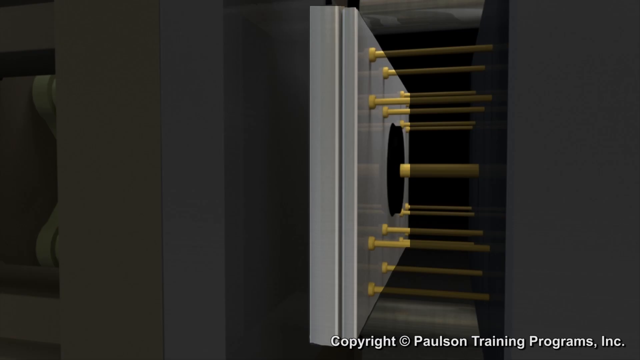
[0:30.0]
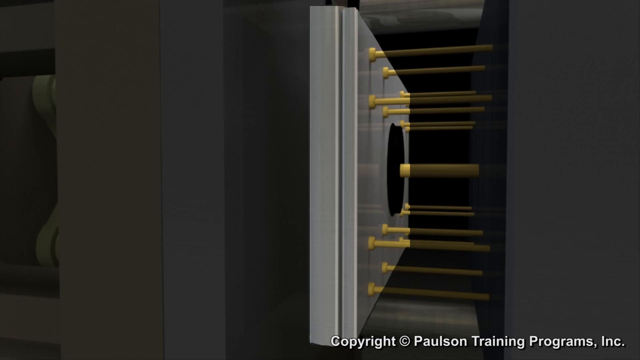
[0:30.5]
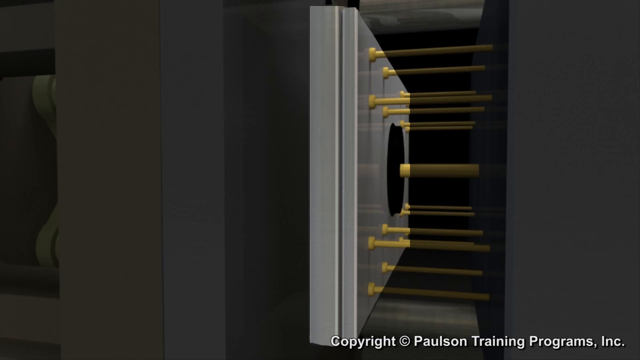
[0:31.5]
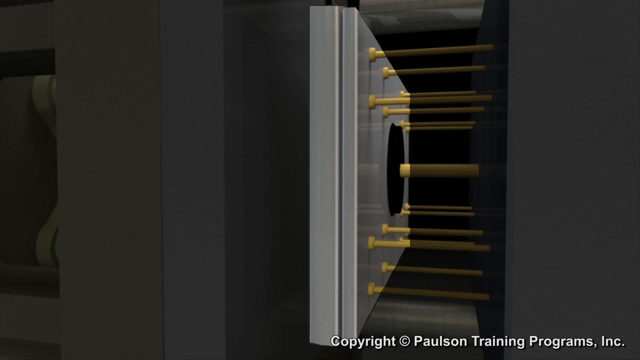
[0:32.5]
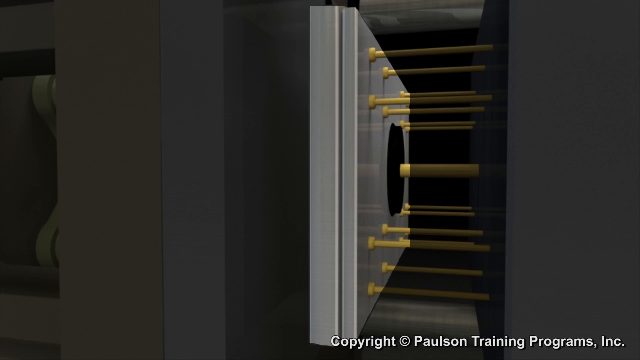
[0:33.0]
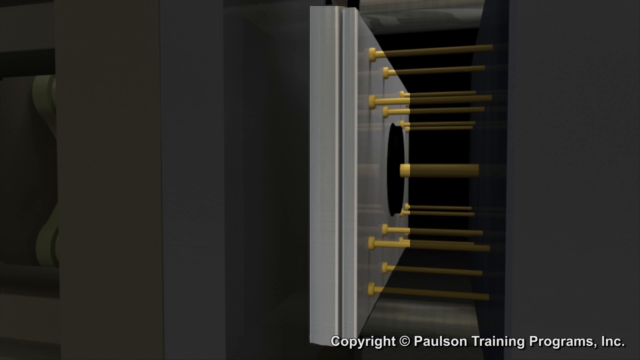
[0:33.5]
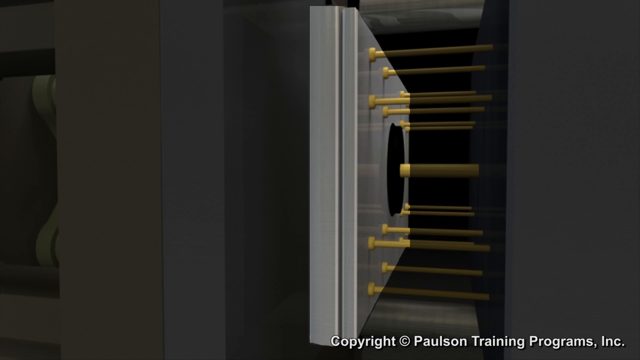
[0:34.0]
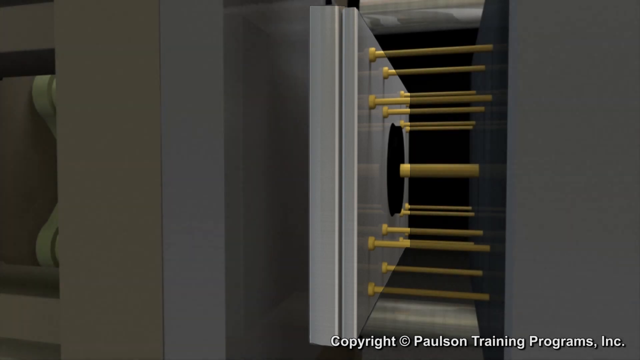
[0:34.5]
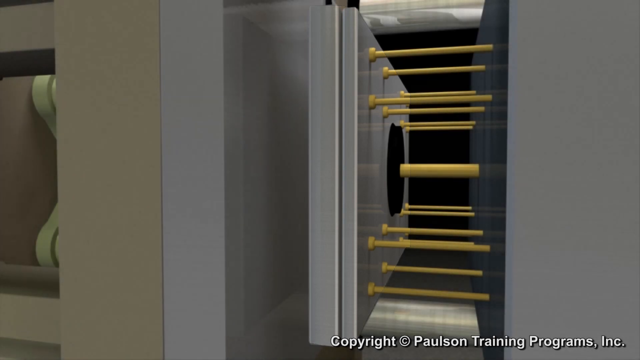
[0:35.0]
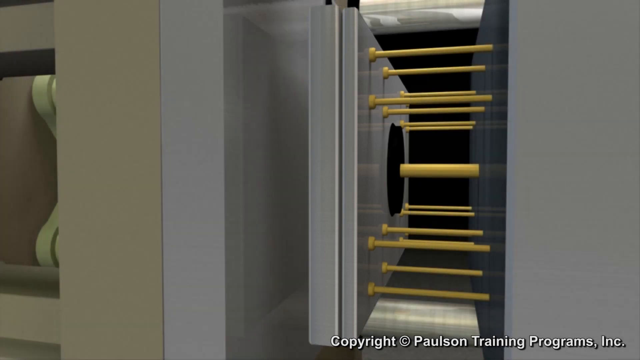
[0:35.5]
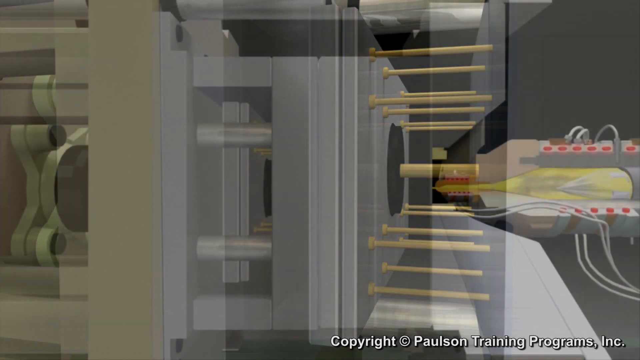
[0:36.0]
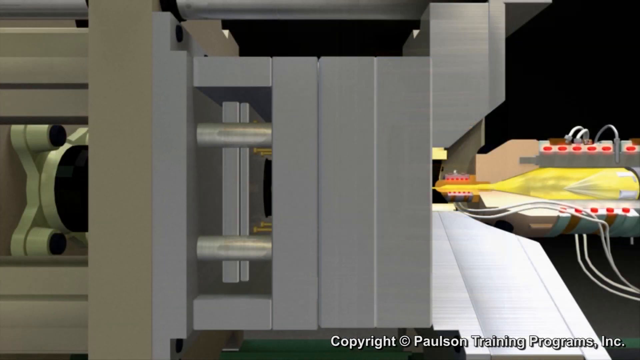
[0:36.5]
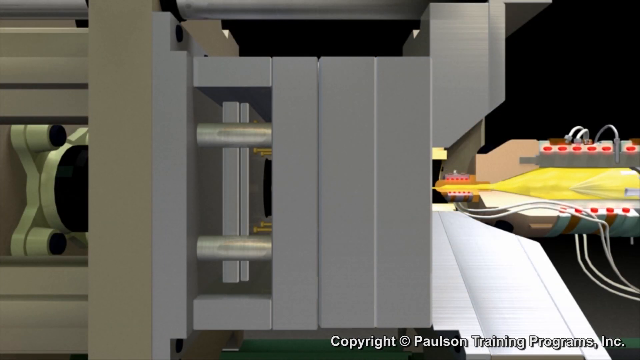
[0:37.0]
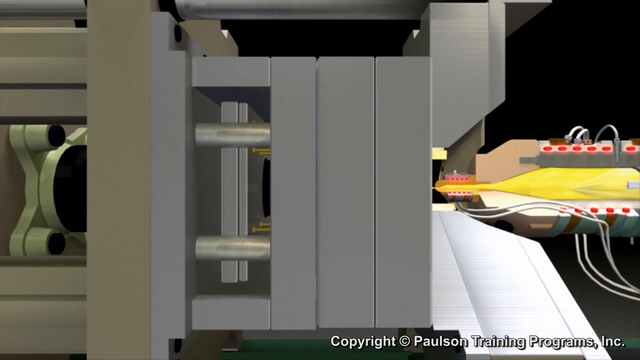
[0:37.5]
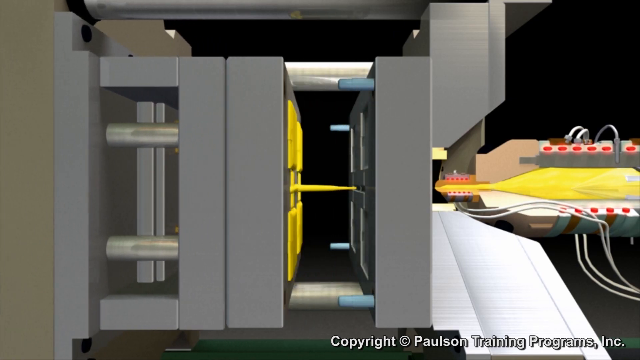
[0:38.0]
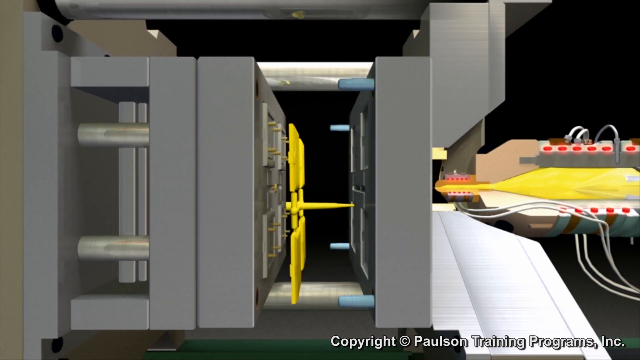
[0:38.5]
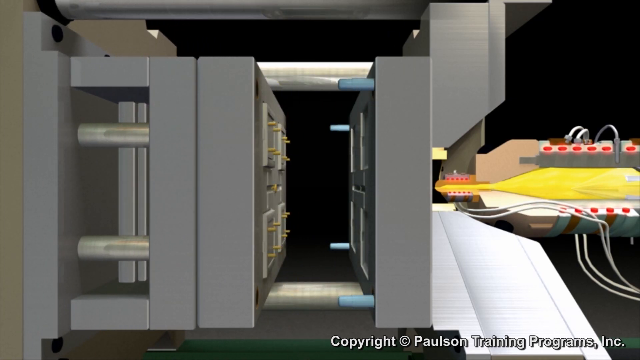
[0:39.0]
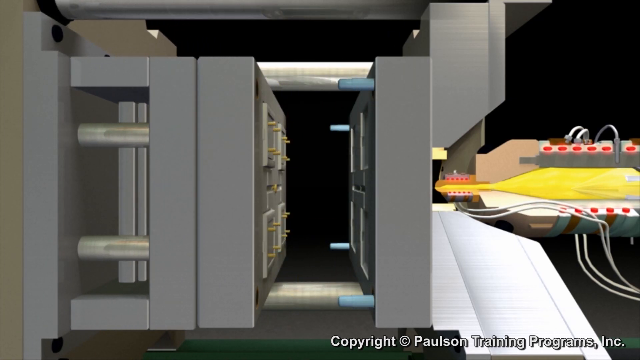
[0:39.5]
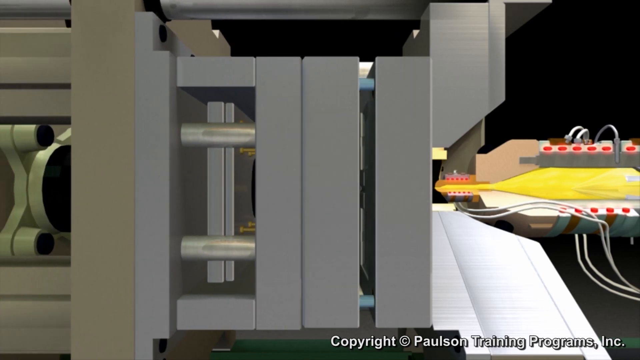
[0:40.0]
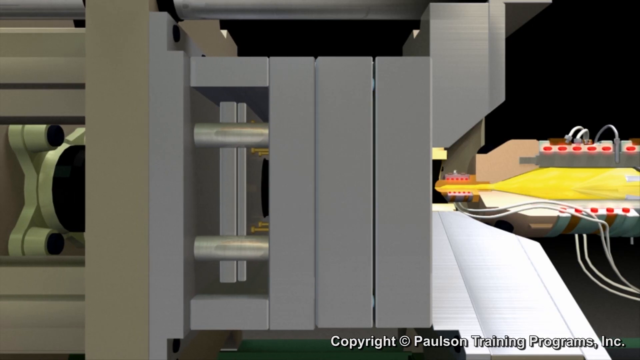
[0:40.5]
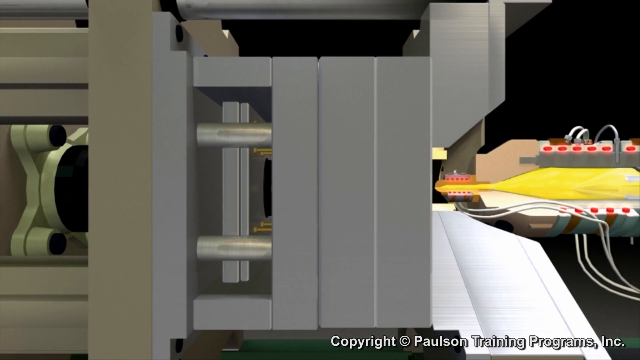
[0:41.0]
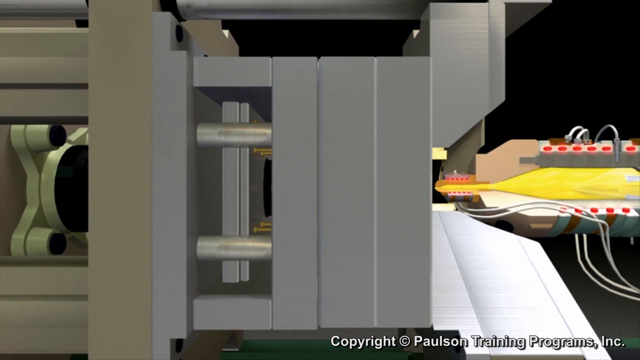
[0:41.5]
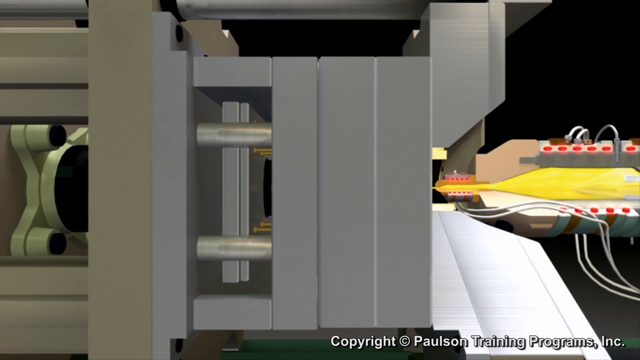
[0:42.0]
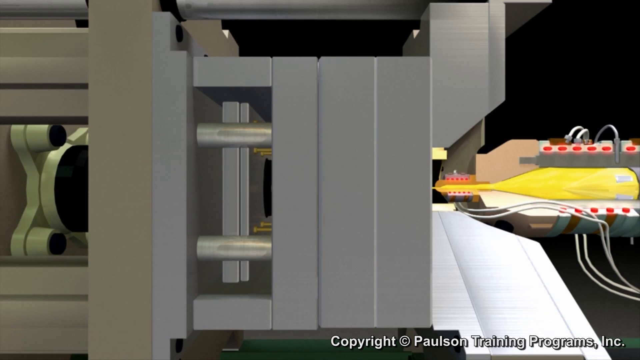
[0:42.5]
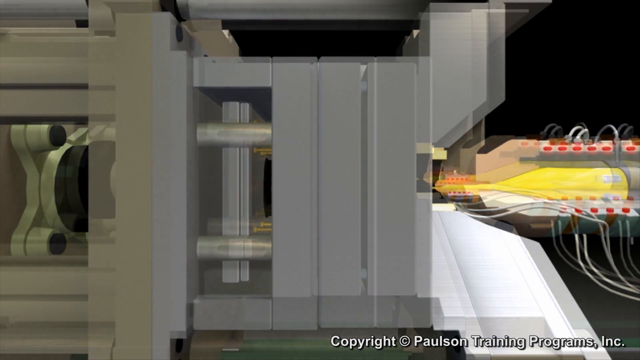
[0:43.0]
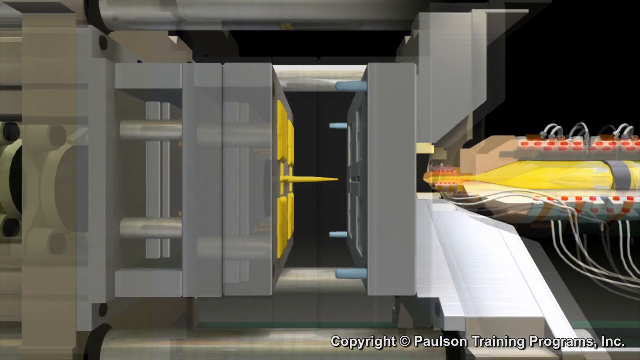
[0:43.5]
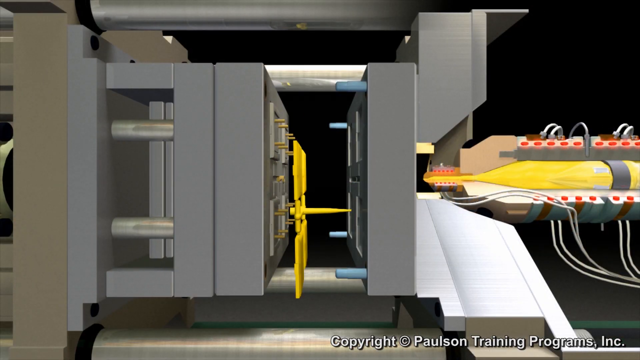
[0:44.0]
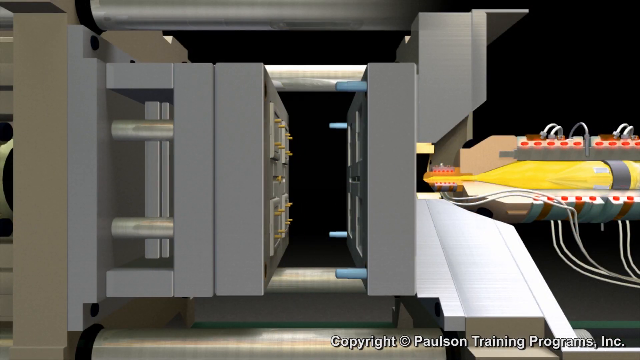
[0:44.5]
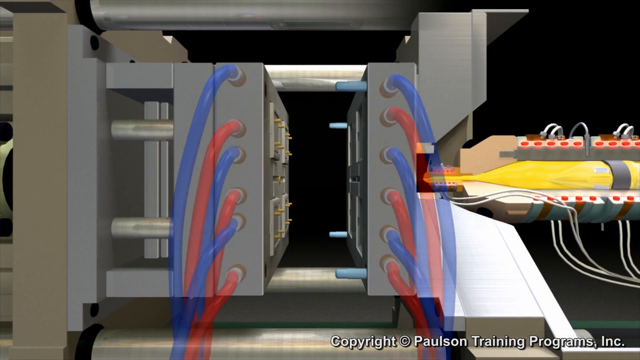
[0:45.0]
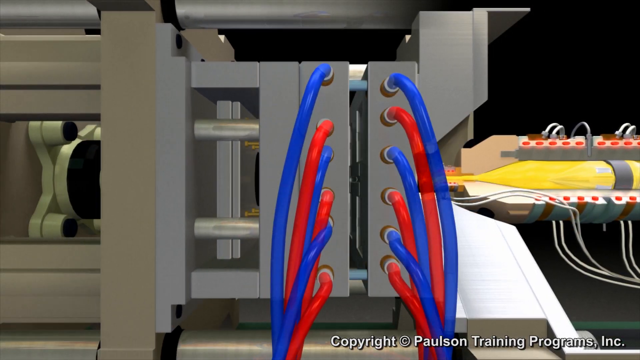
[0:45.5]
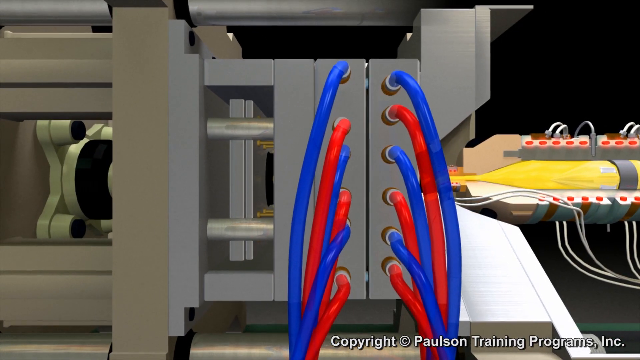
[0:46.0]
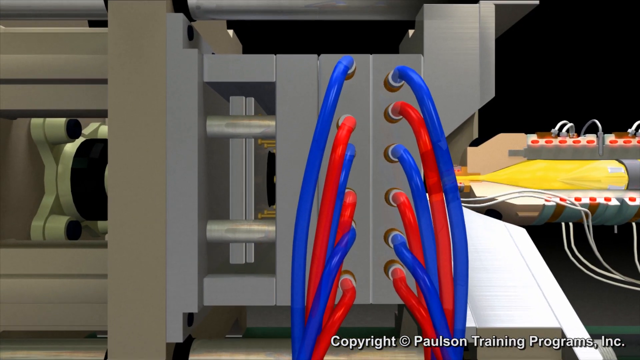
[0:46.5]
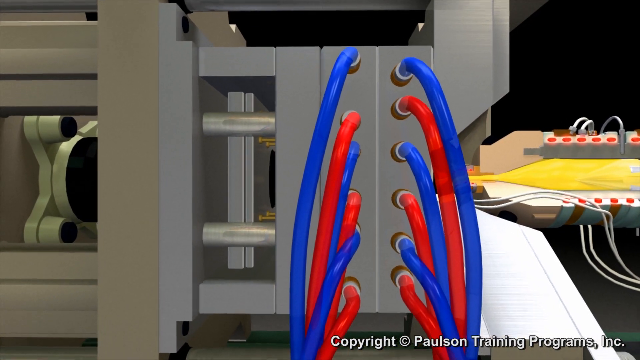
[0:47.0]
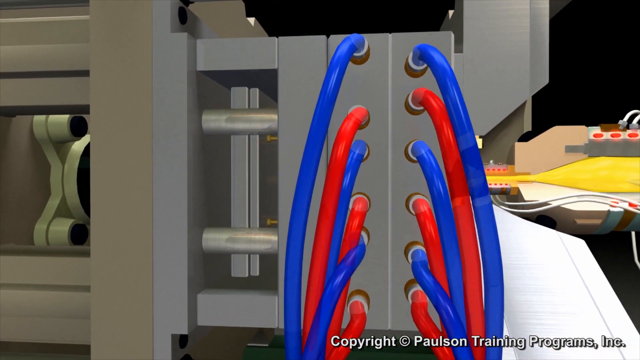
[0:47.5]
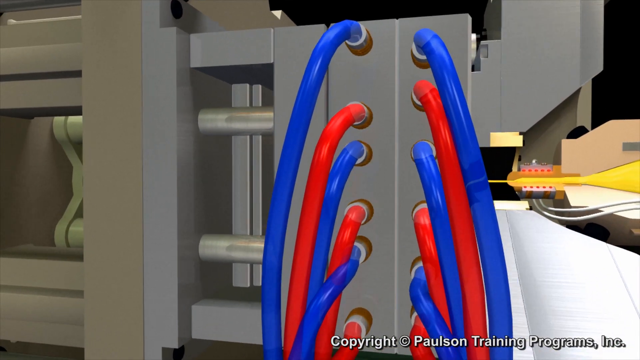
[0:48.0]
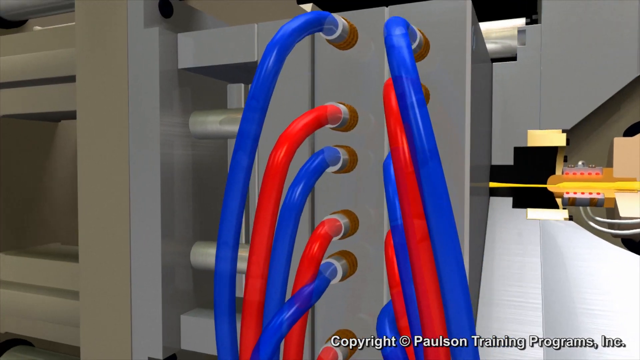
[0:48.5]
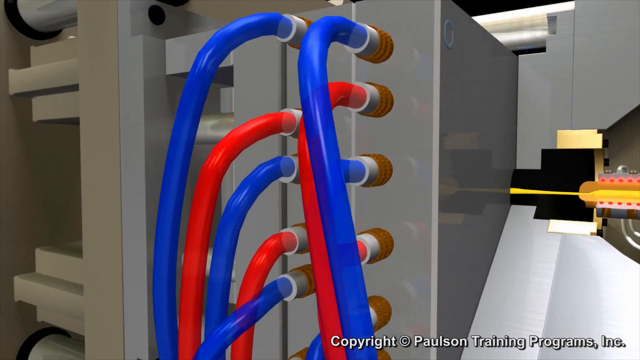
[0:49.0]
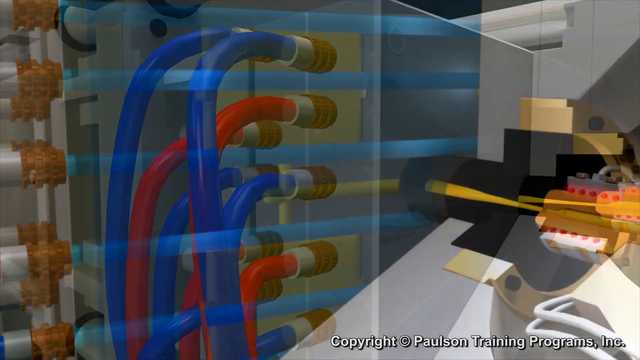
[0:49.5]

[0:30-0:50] A side view shows the elongated parts of multiple ejector pins. The side view switches, and one half of the mold slab retracts toward the left of the screen along the guiding tubes, with yellow hot molding material remaining on the retracting half that has the four smaller rectangles. The ejector pins of the retracted half then push forward, protruding from each corner of the smaller rectangles, which represent the shape being molded, and they move the hardened molded material forward so it detaches from the mold and falls downward. On the right of the screen is the injector, which looks somewhat cylindrical and appears to be shown in cutaway, holding what appears to be very hot liquid mold material, depicted as hot yellow. With the mold half-separated, the ejector pins are fully extended and the hardened material has detached and fallen. The ejector pins retract, and the process repeats, pushing out the hardened molded material each time. Then both halves of the mold are shown fitted with tubing in alternating colors, blue, red, blue, red, blue, red; each half appears to have six tubes, half blue and half red.